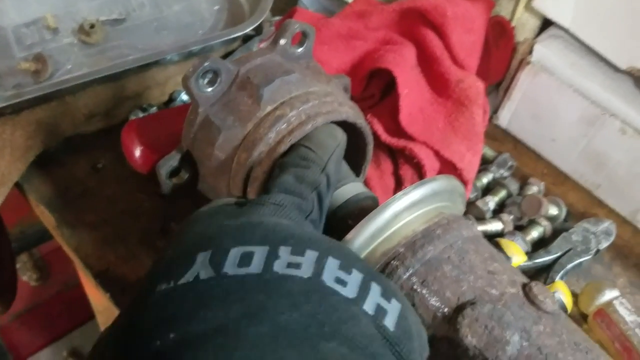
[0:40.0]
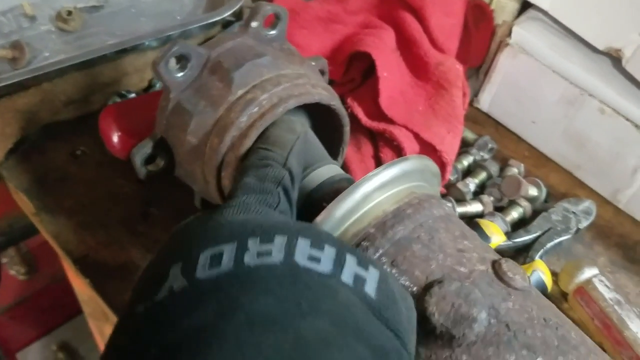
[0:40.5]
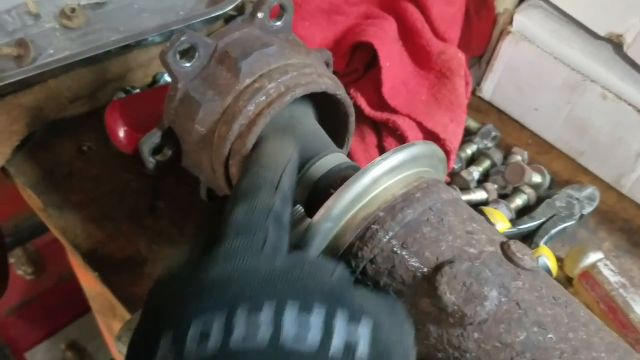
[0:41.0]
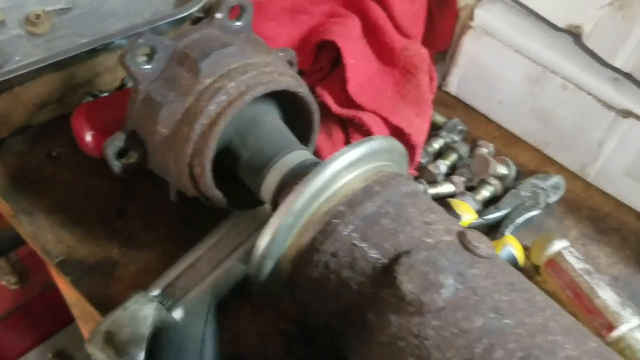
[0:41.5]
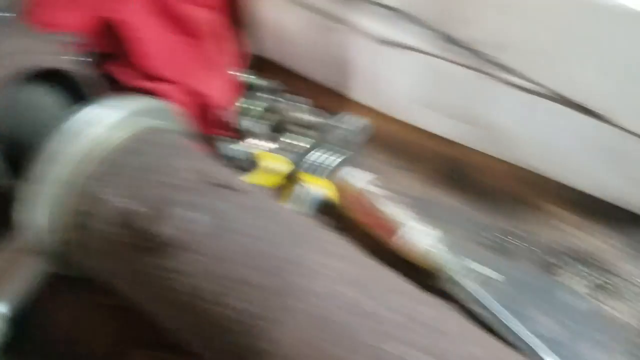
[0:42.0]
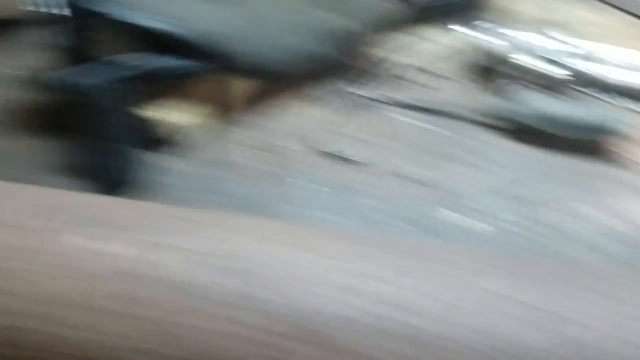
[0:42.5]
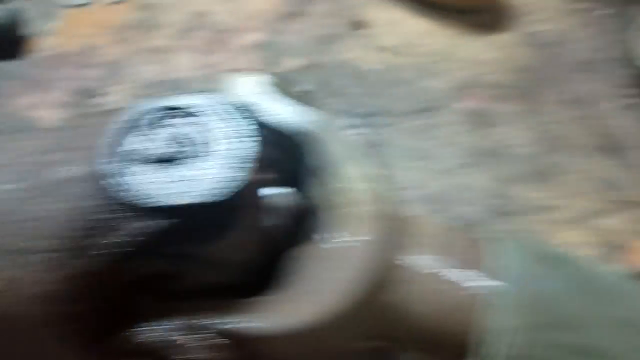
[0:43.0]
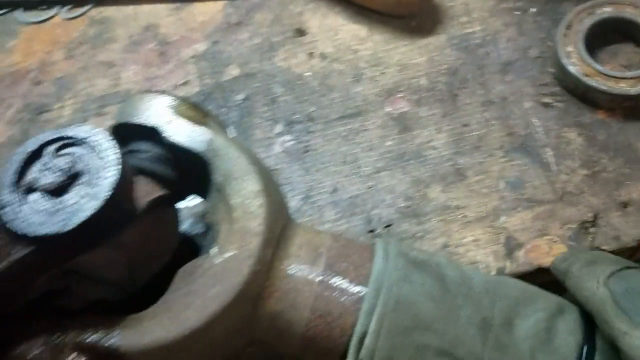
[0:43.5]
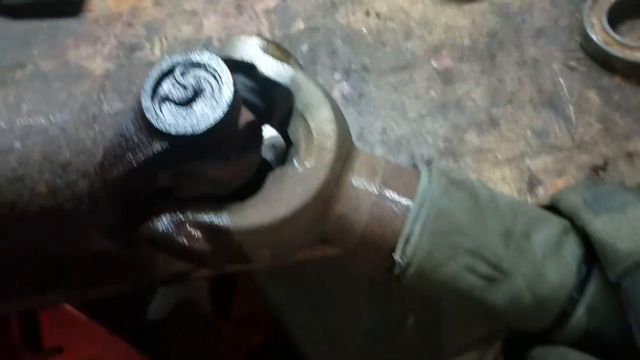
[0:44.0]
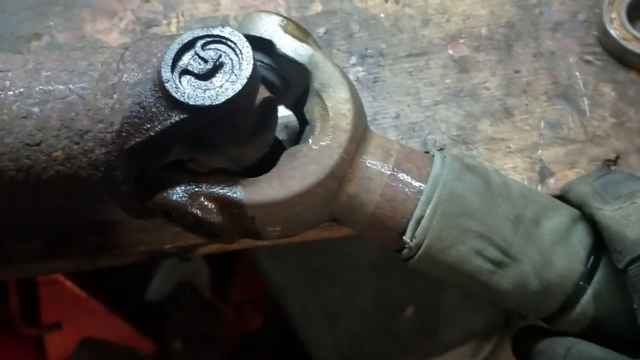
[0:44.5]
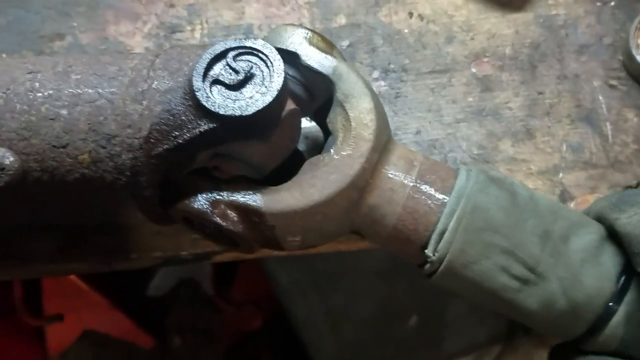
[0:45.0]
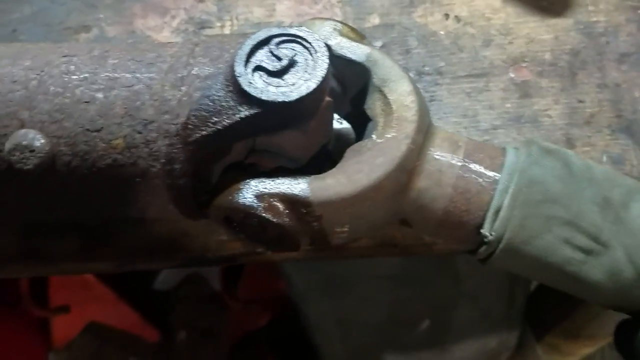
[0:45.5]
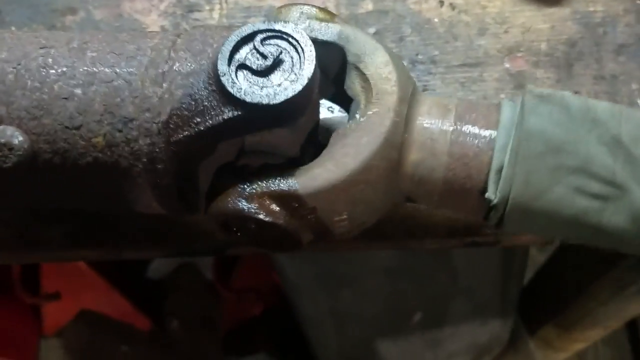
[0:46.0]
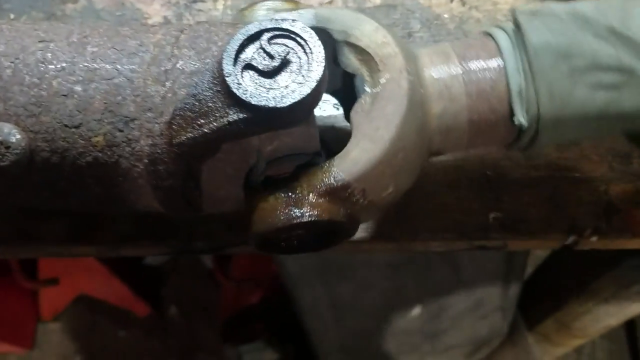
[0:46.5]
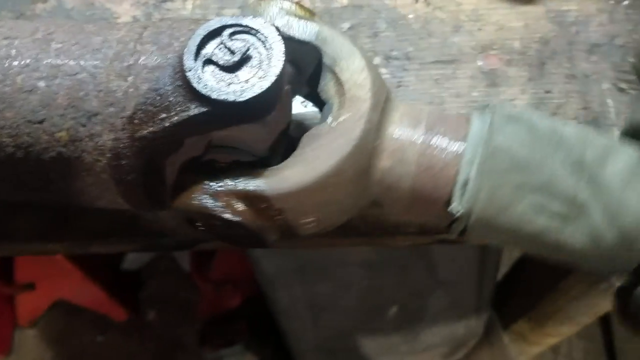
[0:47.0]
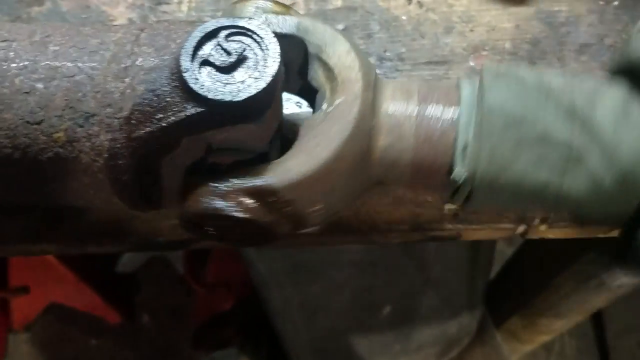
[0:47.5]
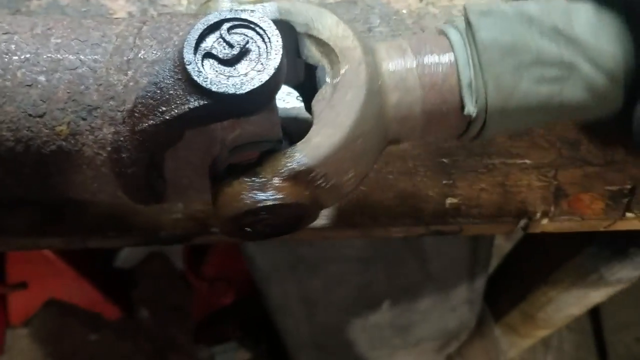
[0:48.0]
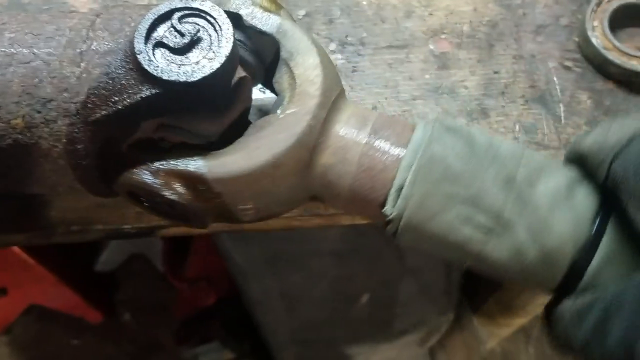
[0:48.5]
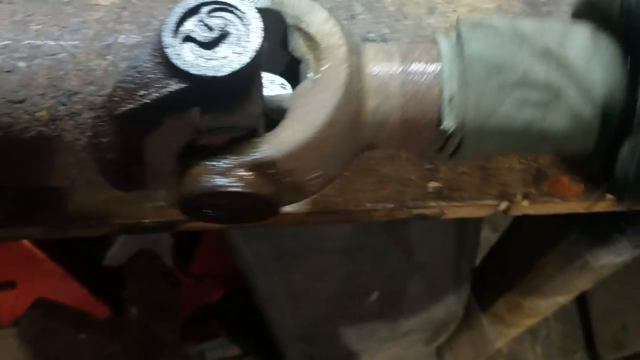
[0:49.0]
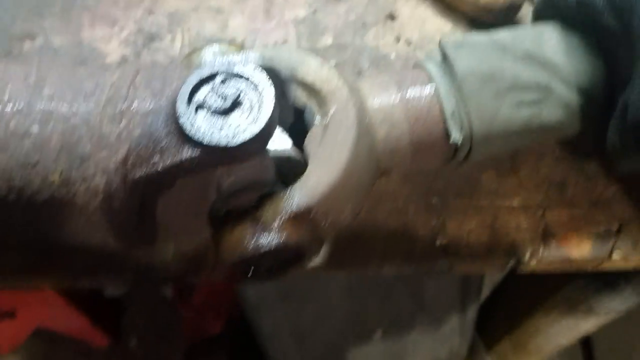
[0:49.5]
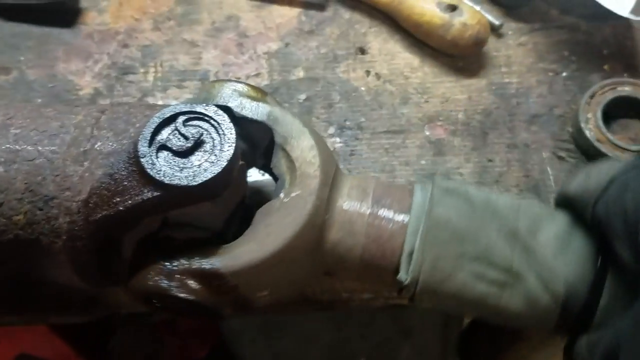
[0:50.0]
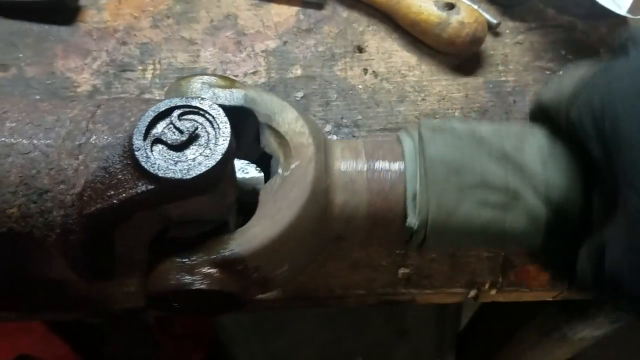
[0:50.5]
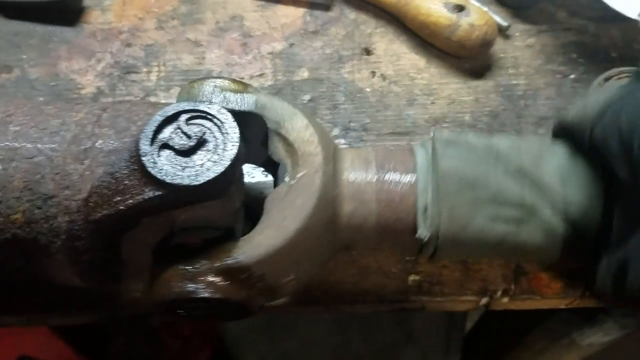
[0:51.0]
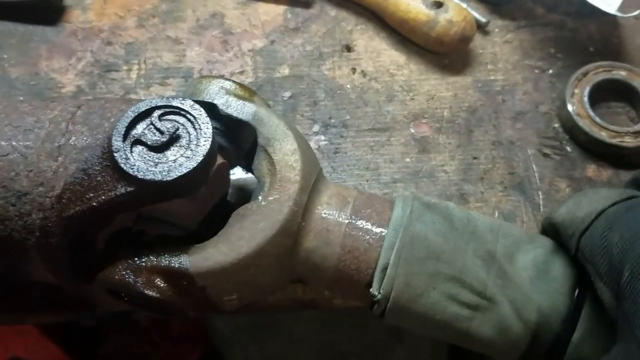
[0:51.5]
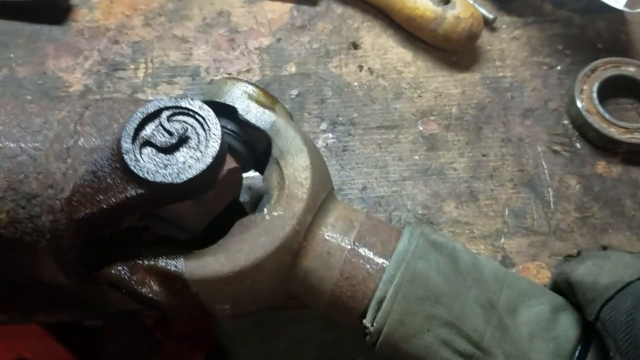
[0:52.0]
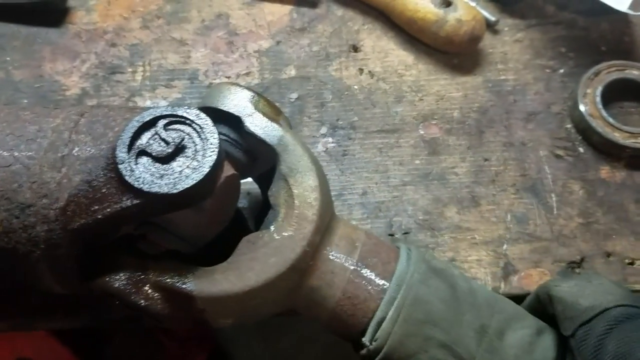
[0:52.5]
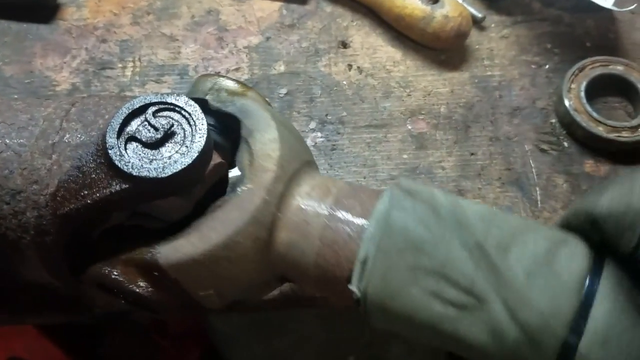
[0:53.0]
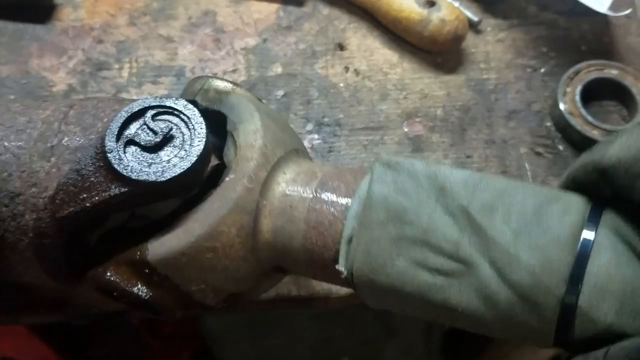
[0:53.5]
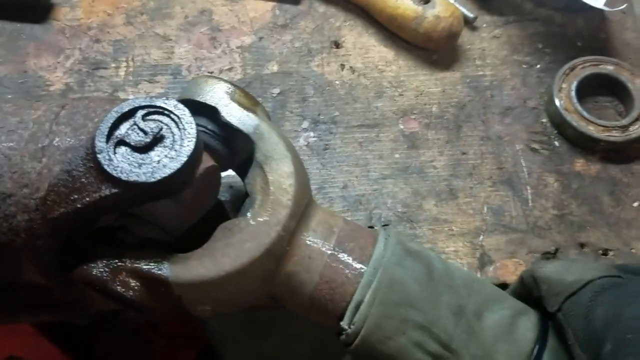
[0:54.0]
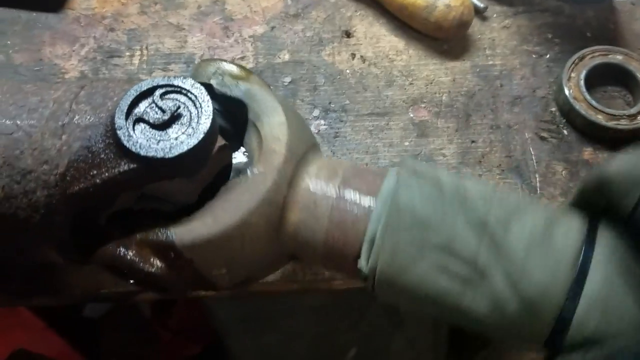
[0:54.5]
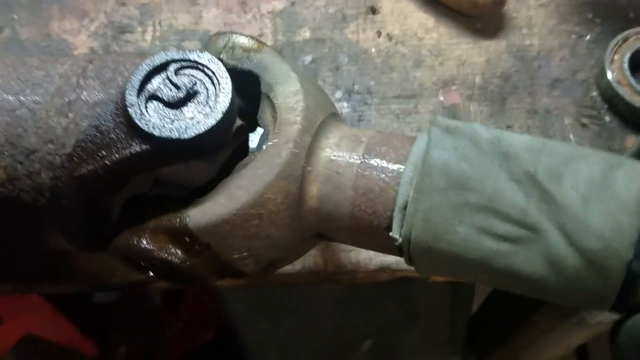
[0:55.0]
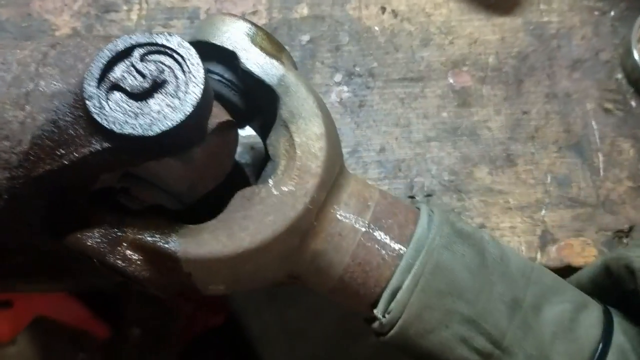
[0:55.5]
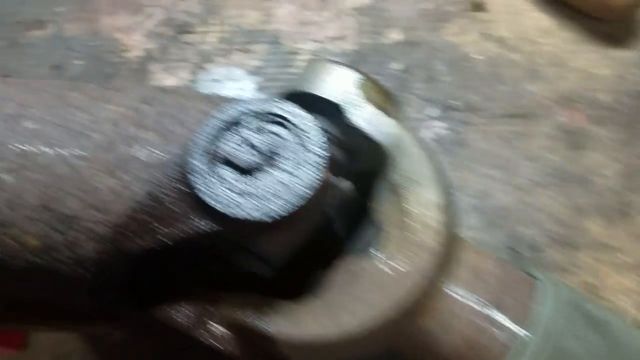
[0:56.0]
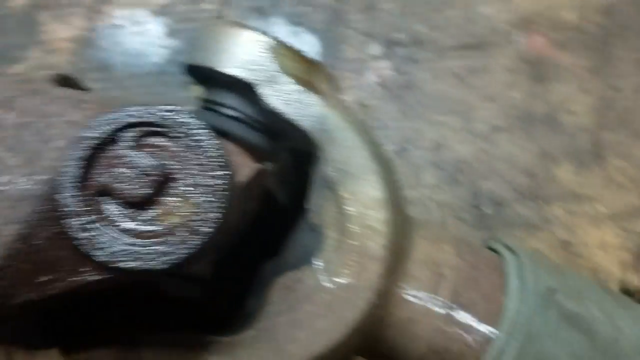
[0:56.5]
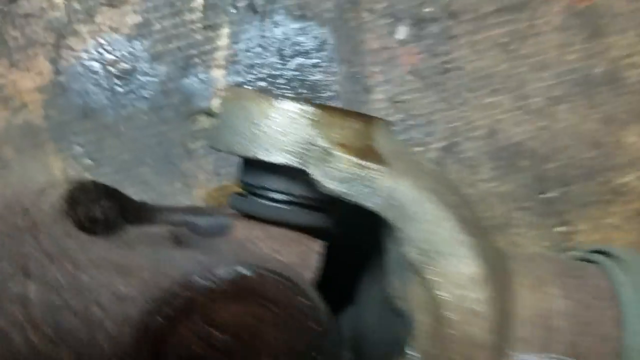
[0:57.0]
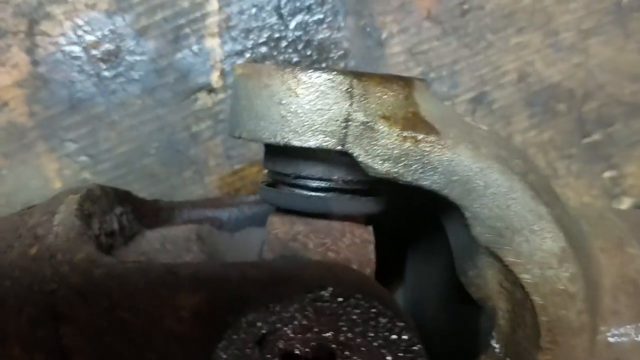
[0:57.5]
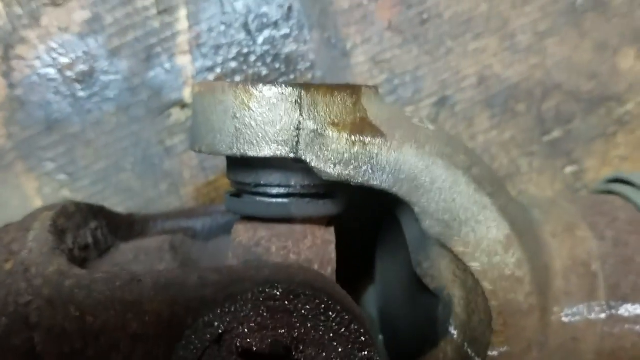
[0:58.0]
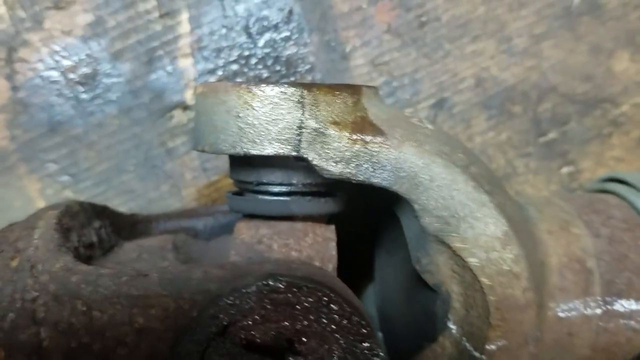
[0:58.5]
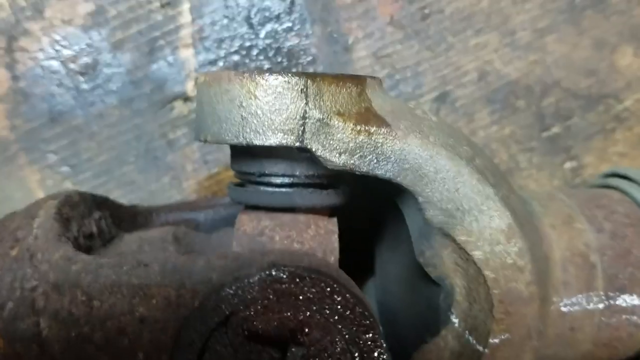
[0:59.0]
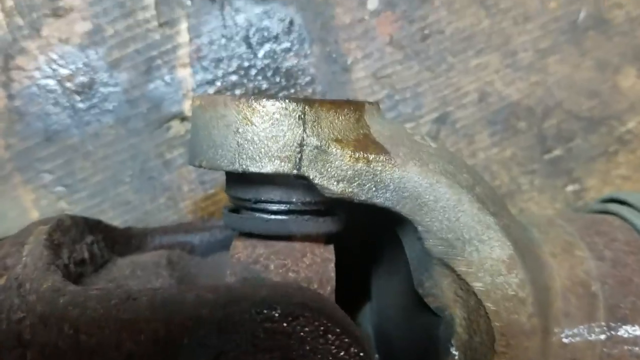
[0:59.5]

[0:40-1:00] A close-up shows a gloved right hand with text printed across the top of the glove that says "Hardy". The middle finger is inserted into a section of a metal piece resting on a table, sort of works its way around inside the hollow area, and then comes out. The camera pans fully from left to right to the other end of the table, where the original metal piece that resembles some sort of shaft is, with the cloth on its right side. The gloved right hand grabs this piece, which was hanging off the table some, and sort of flexes it inward; it moves at the joint at the center of the screen. The hand flexes it back and forth several times, sort of working it back and forth, apparently to work the lubrication or see if it moves freely as it should. Then, still holding the end with the cloth on it, the hand moves the item up and down.